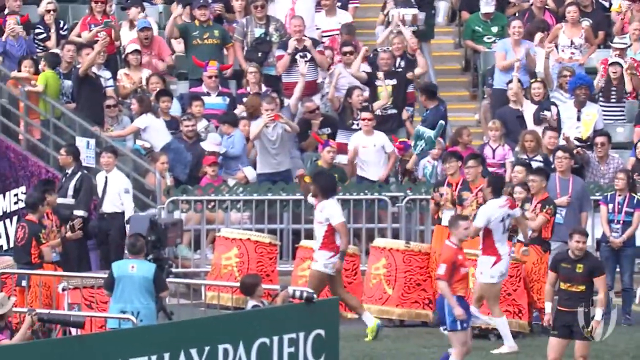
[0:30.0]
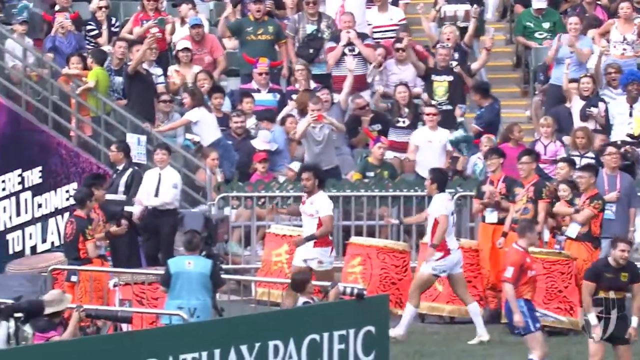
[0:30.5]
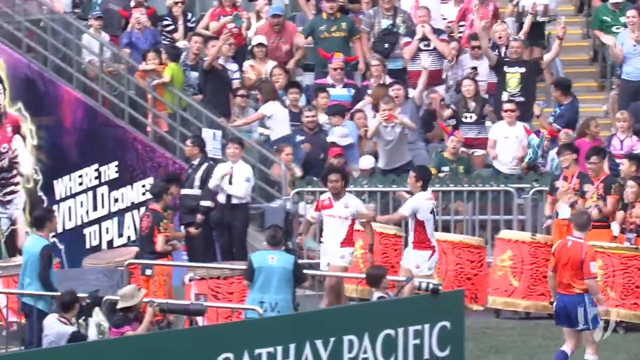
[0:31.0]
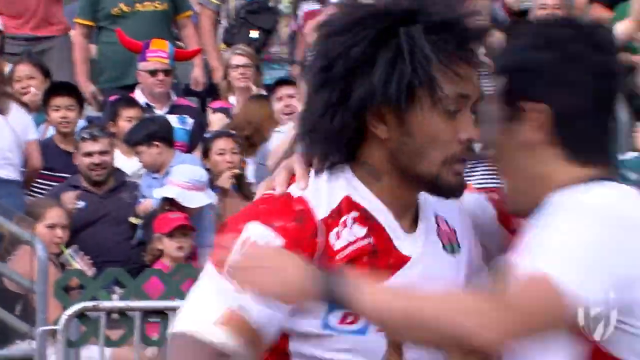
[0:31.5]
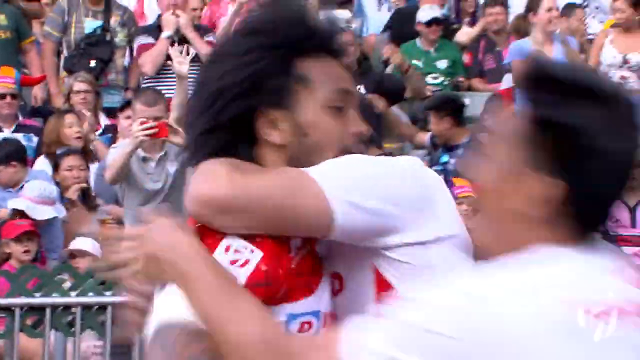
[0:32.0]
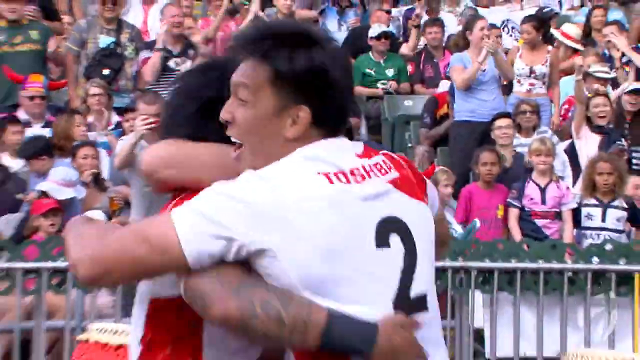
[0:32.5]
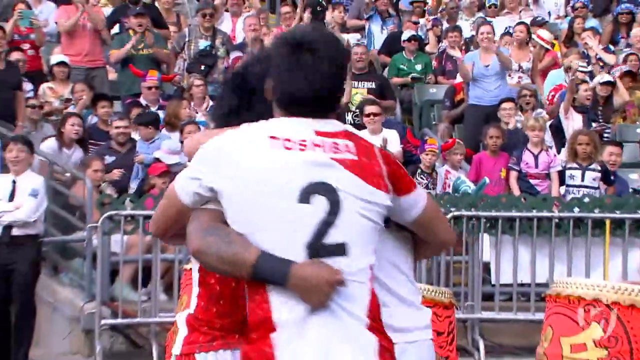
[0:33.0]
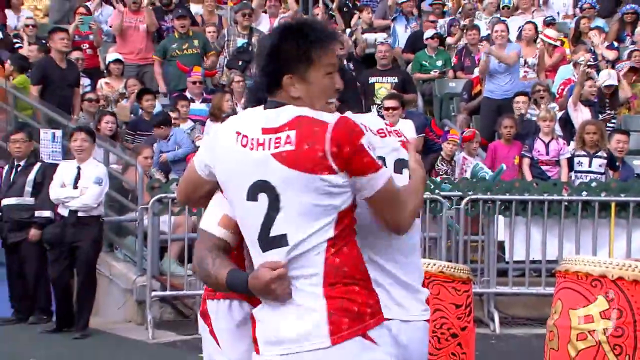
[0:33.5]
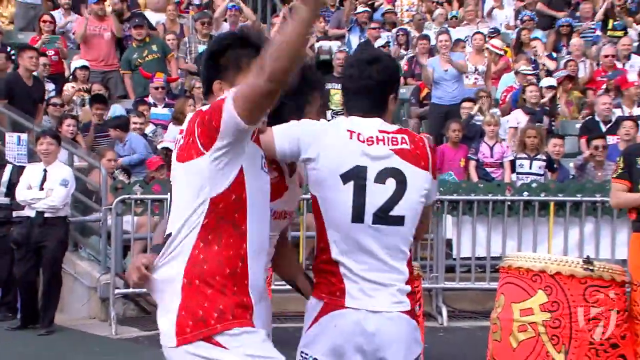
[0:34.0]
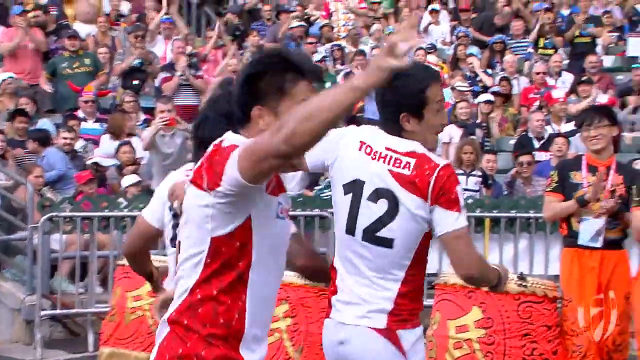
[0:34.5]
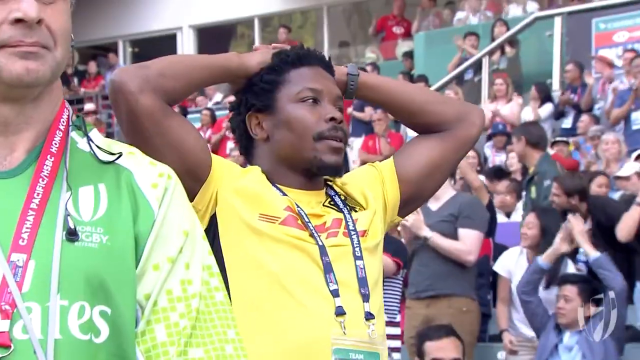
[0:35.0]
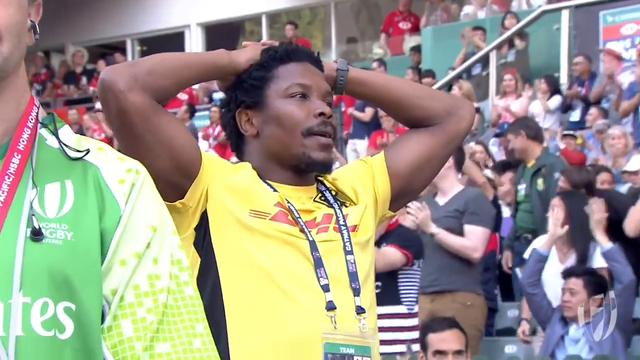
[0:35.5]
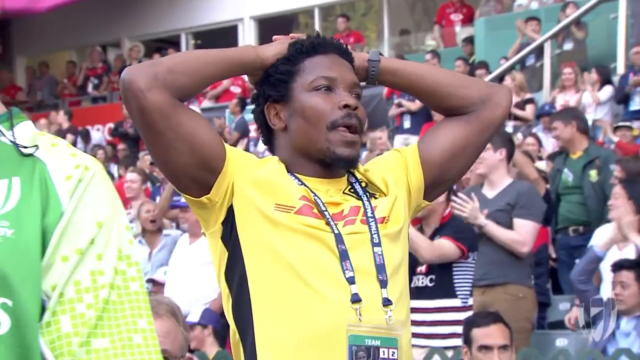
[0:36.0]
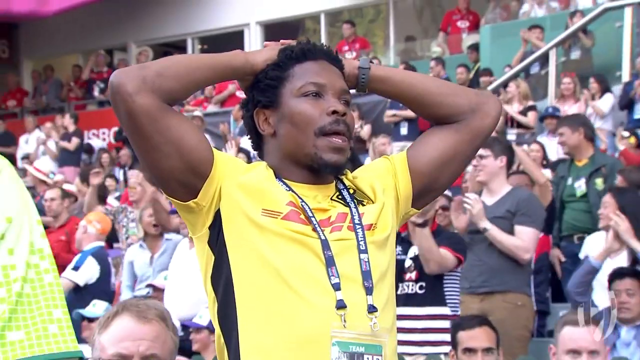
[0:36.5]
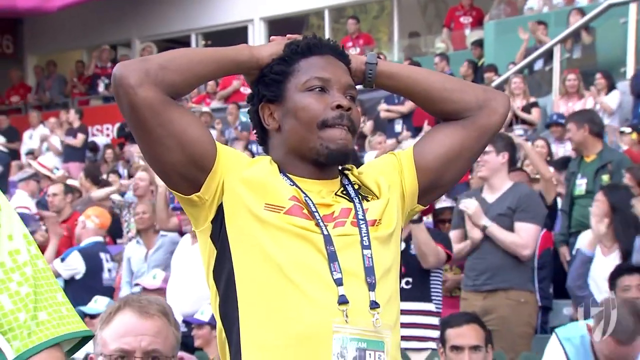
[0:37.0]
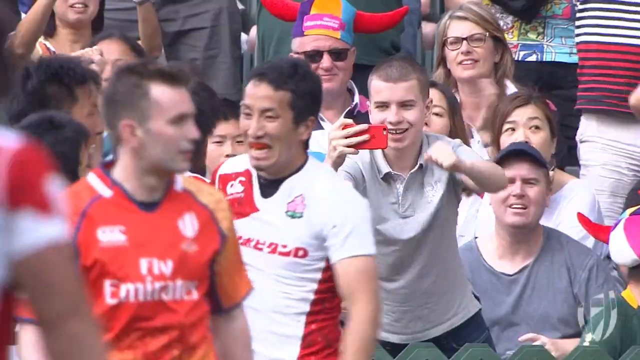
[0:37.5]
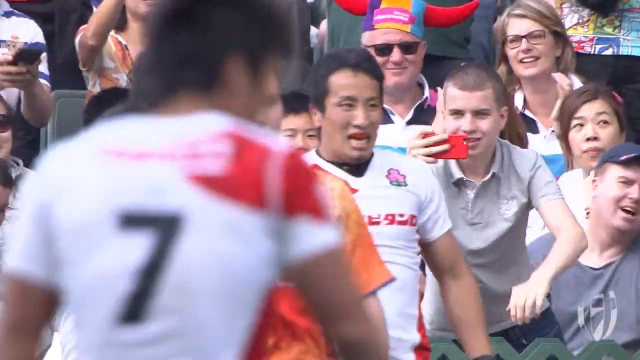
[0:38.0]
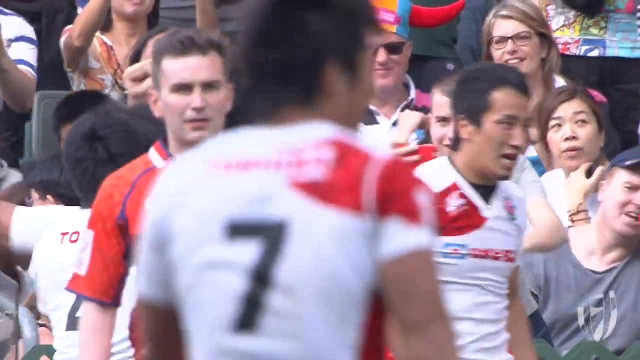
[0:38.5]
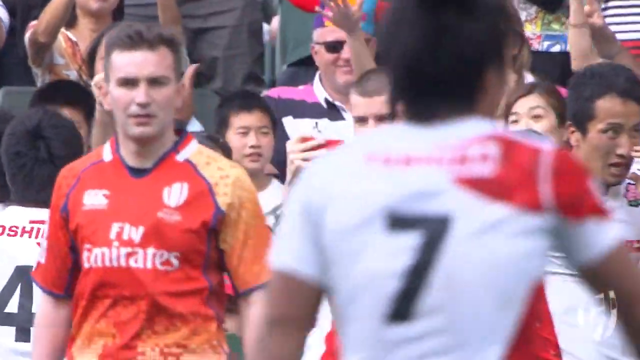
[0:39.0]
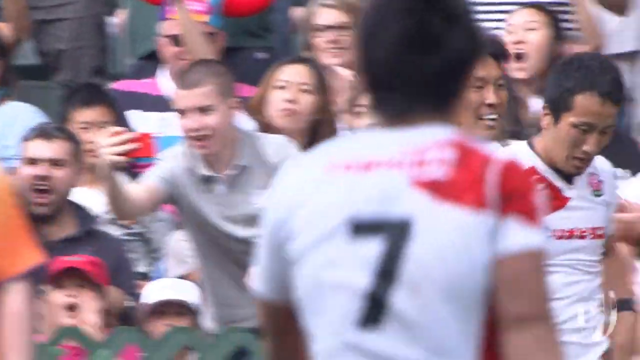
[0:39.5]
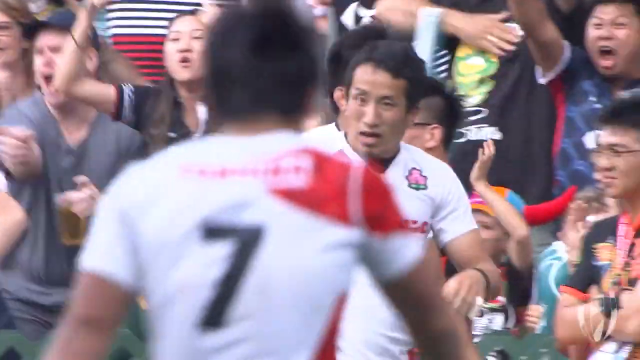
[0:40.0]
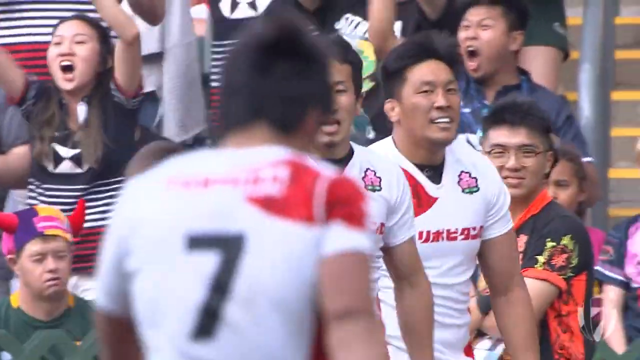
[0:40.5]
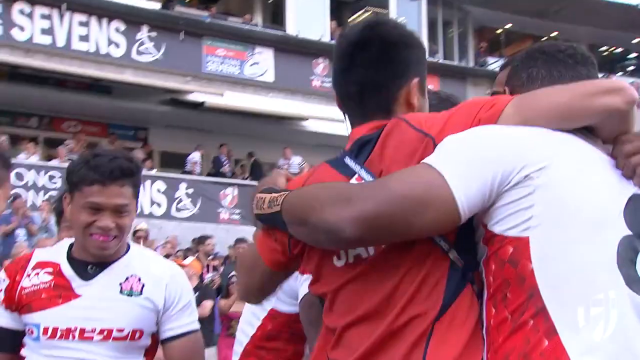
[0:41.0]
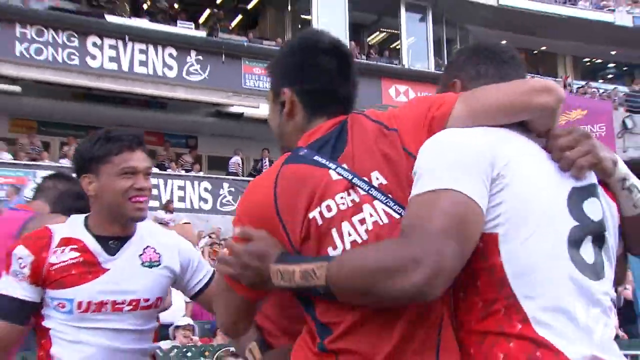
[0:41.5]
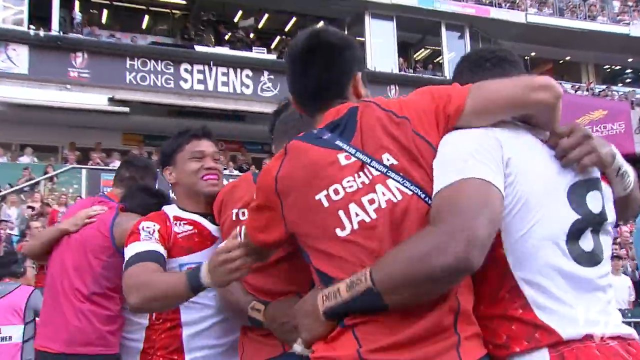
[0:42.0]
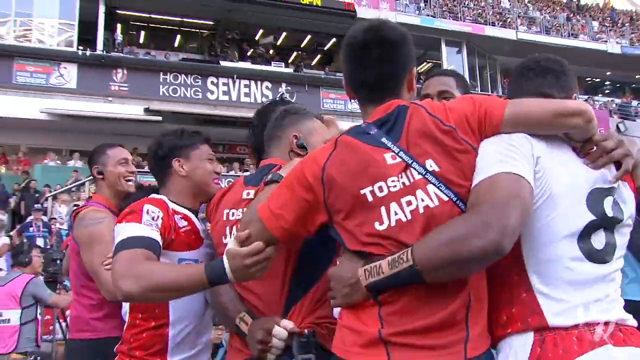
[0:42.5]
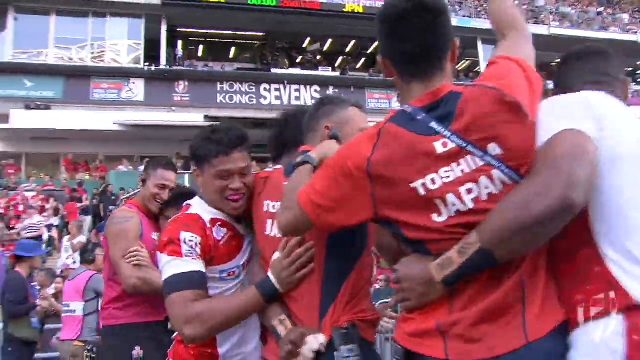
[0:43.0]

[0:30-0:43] The video is a little wider than it is tall and shows the sidelines of some sort of sporting event. A fence runs to the left, and about maybe 75% of the way over from the right it goes up what looks like a ramp or stairs. A couple of players in white uniforms, apart from some red on the sides, are in front of the crowd and the fence. The two men come together, and the man on the right hugs the neck of the man on the left, a Black man with a big afro. A man who looks Asian then comes in from the right and hugs them both. He turns his back to the camera, showing a black number two on his back, and smiles as he throws his right arm up in the air. The view then goes to a man on the side wearing a black lanyard around his neck and a bright yellow shirt, except for vertical stripes on the sides. He has his hands on his head and looks very surprised. Then a couple of other men from the same team as the first players walk to the right with big smiles.